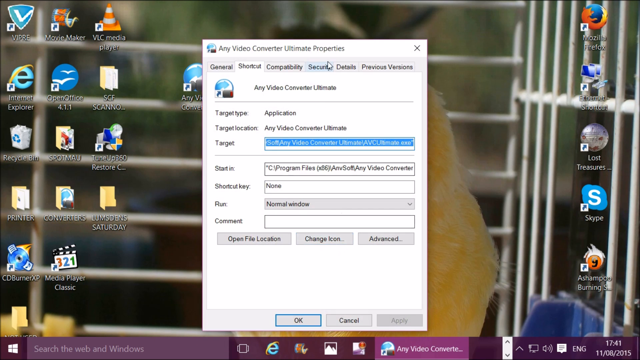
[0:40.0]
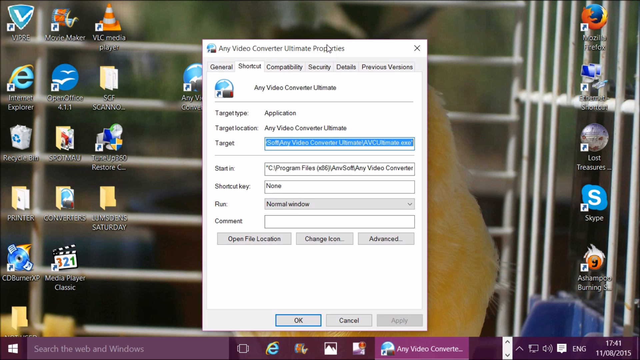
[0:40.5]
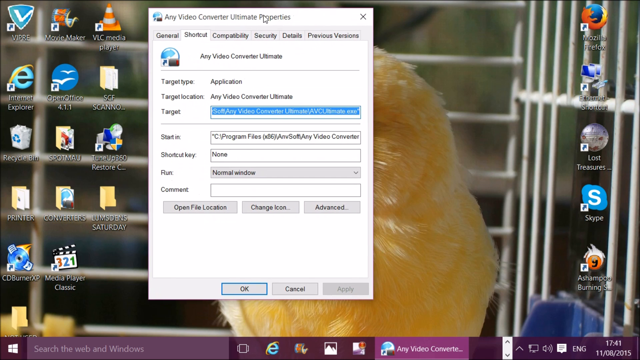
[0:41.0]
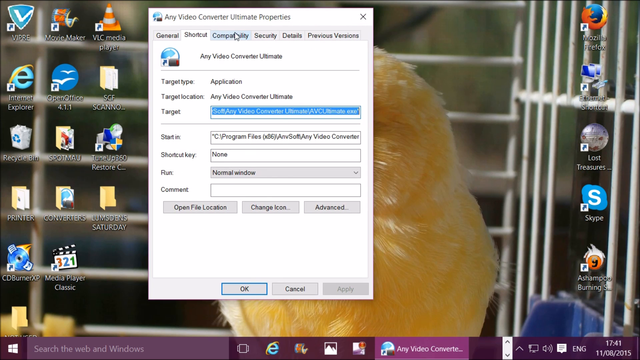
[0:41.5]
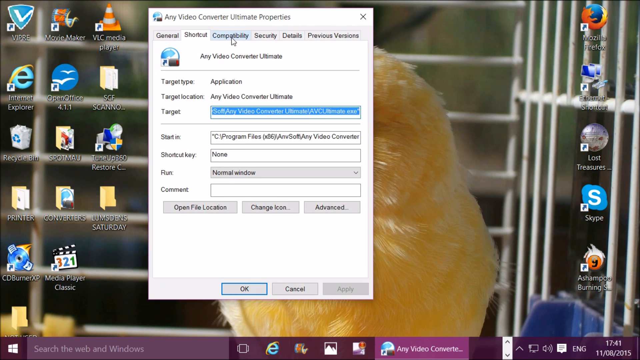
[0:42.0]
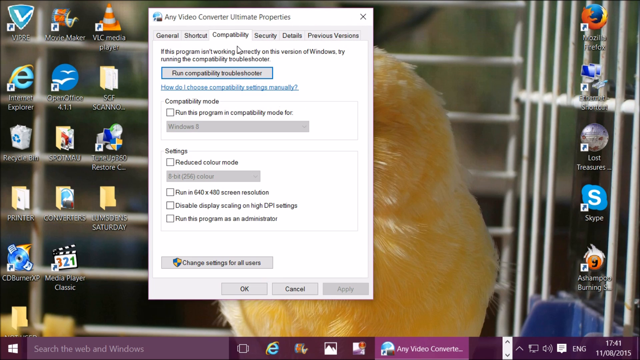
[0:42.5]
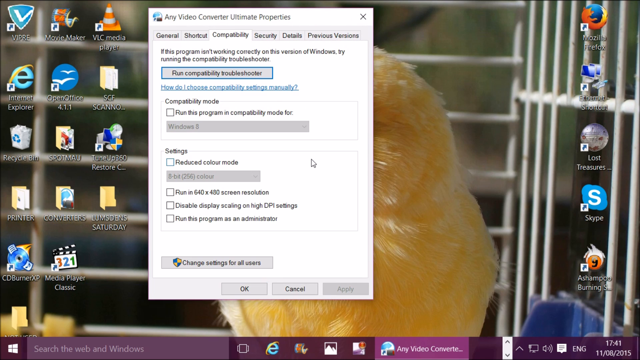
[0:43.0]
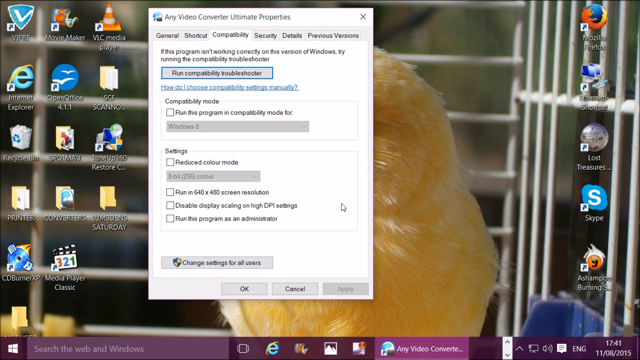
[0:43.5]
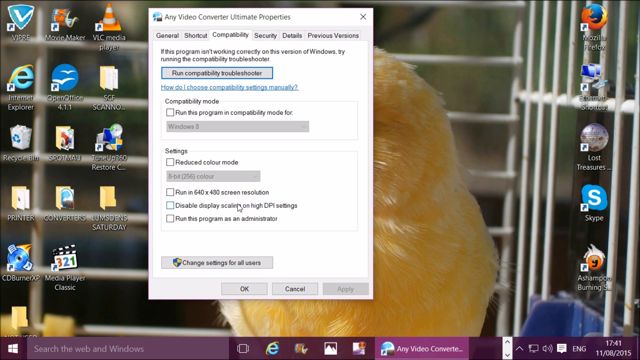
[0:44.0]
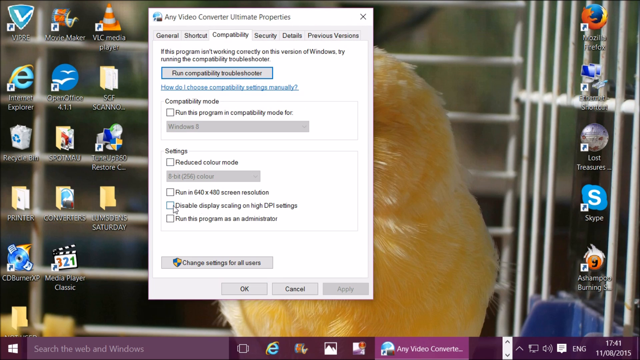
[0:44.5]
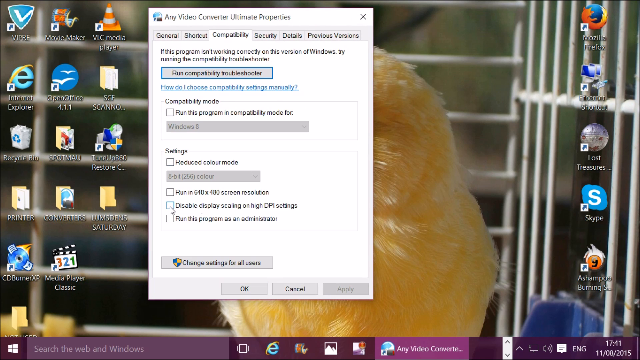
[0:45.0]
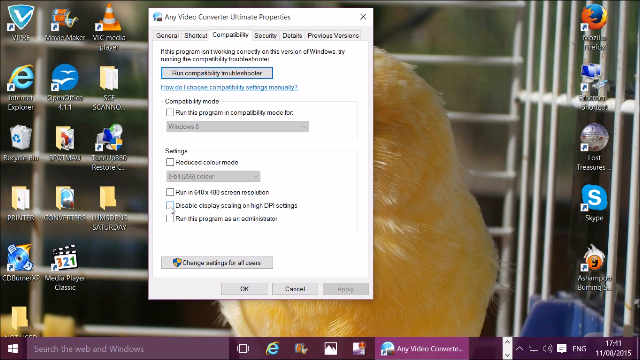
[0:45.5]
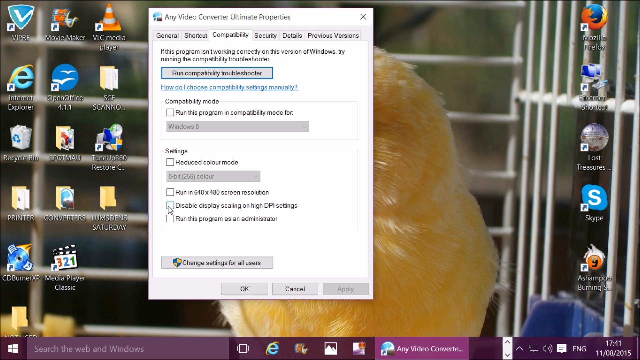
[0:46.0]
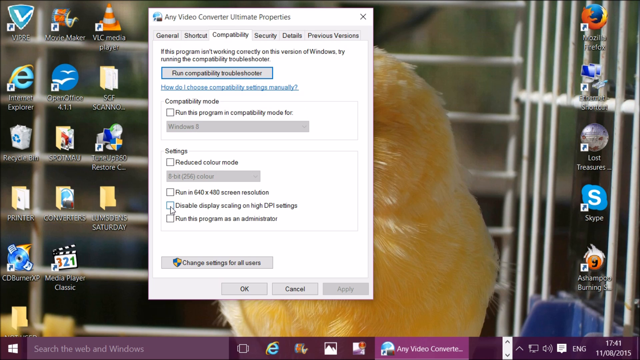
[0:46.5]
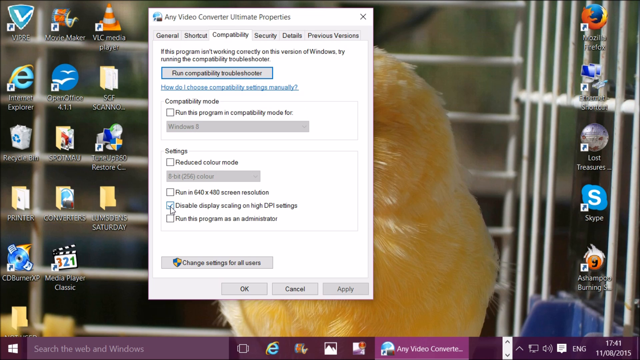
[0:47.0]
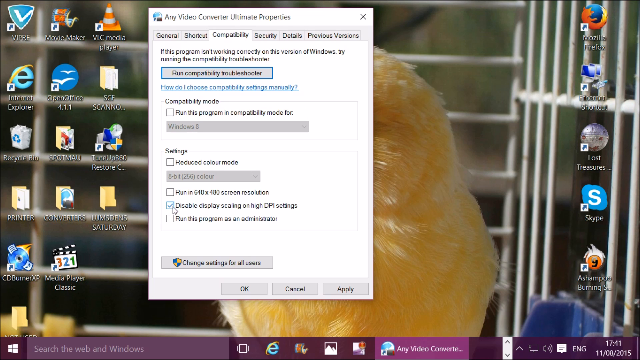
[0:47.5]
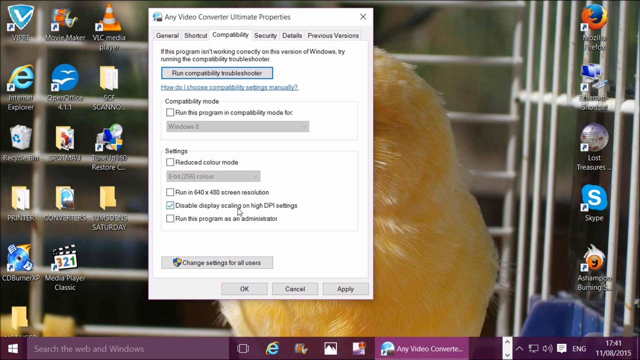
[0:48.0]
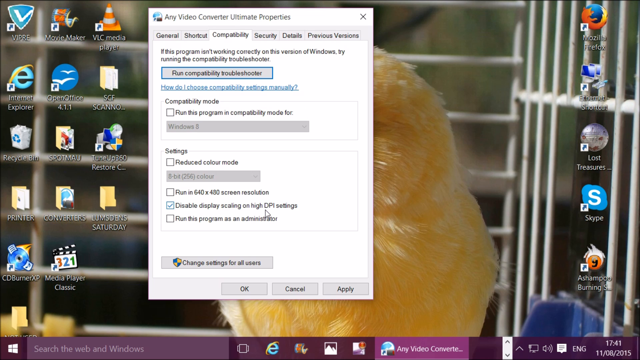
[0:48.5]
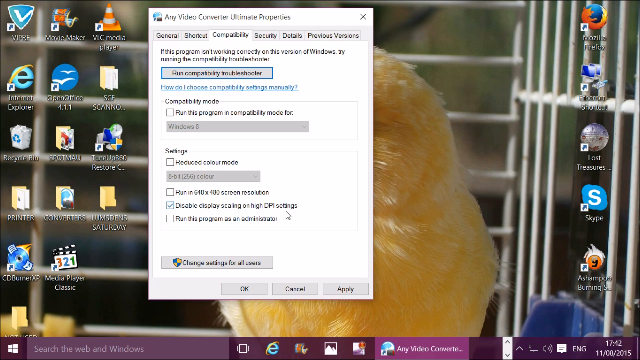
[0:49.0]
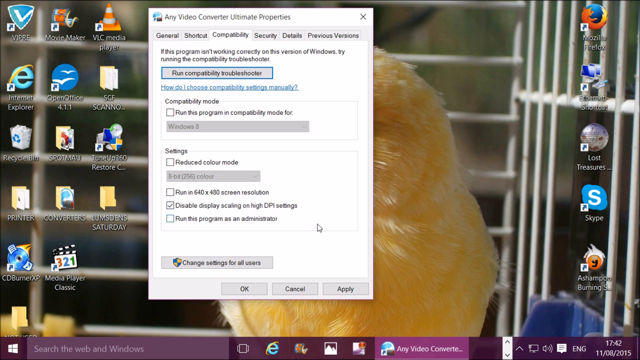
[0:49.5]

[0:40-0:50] The person enters the properties options and then goes to the settings options. The app is named Any Video Converter, a video converter app.